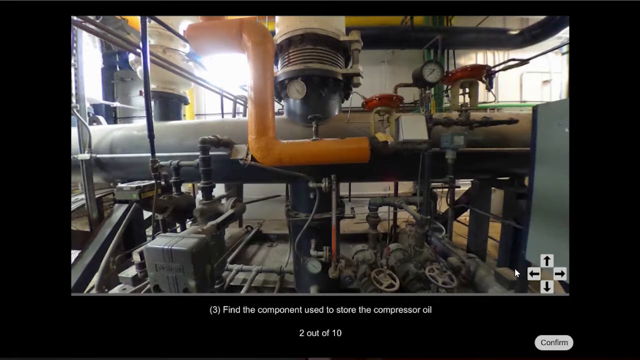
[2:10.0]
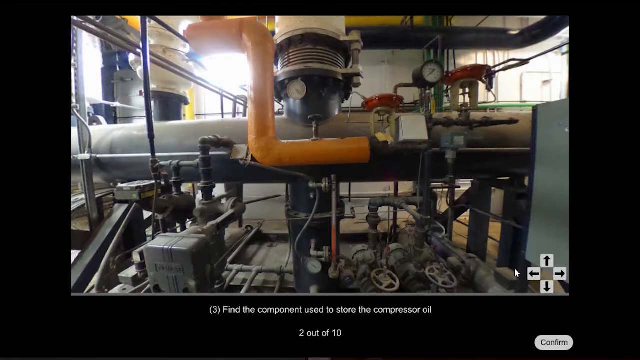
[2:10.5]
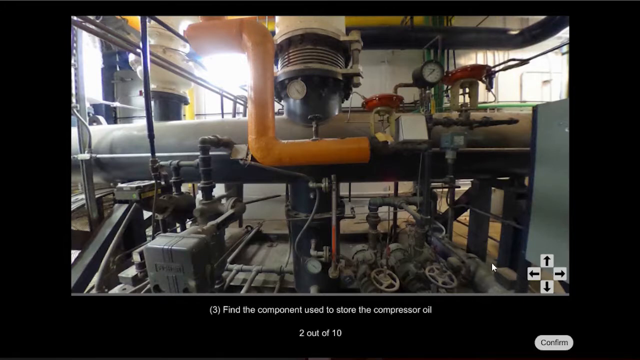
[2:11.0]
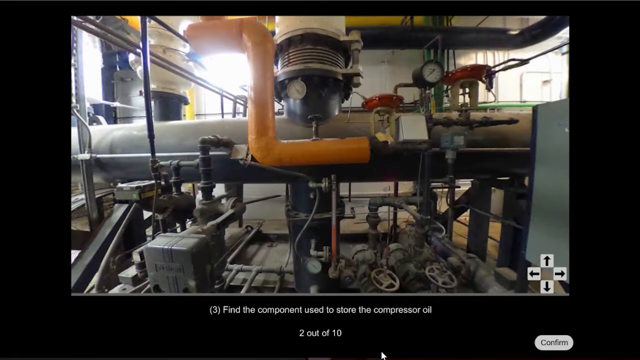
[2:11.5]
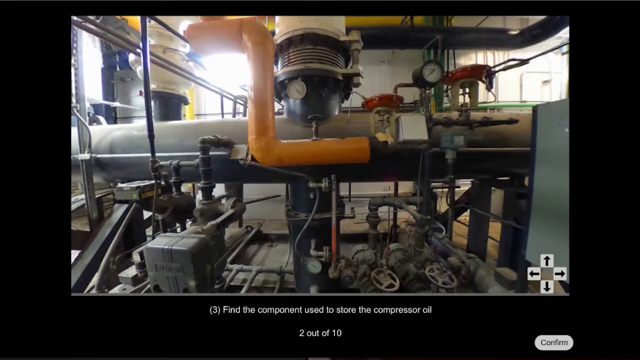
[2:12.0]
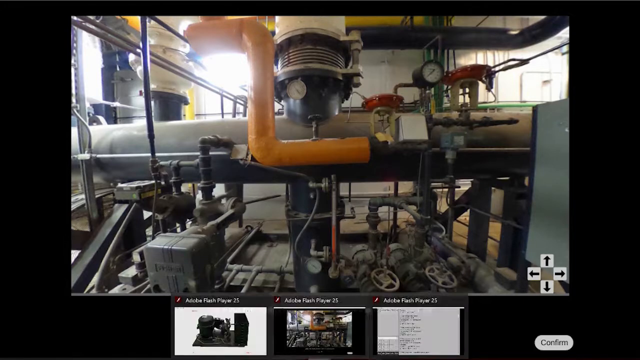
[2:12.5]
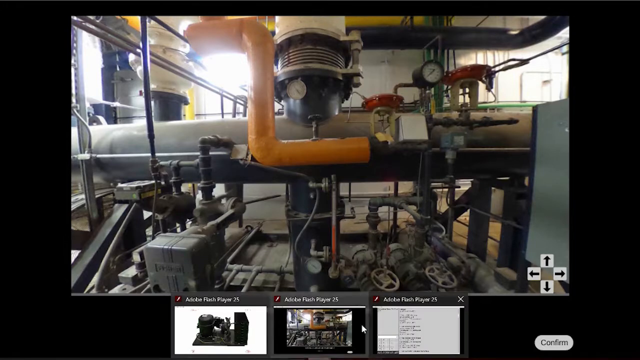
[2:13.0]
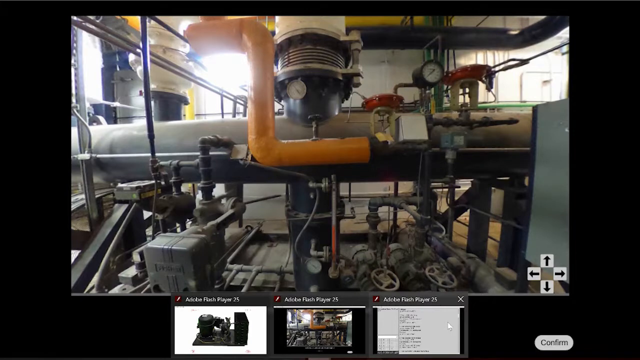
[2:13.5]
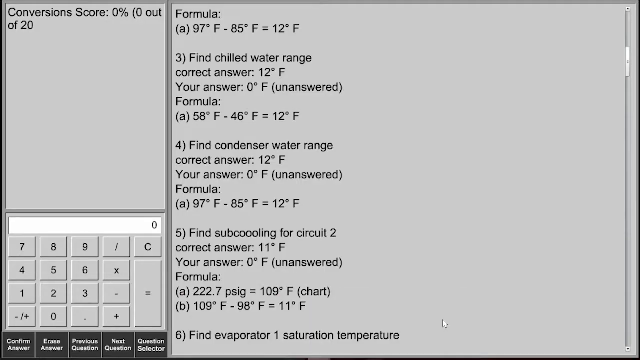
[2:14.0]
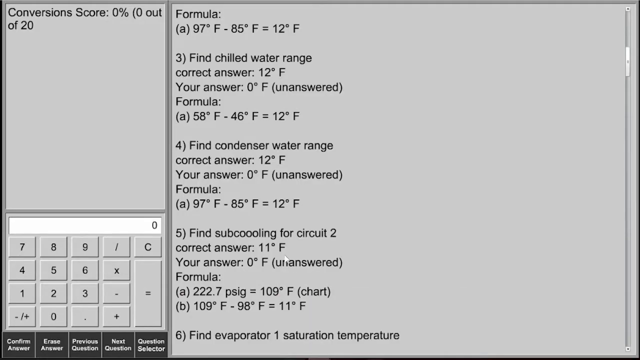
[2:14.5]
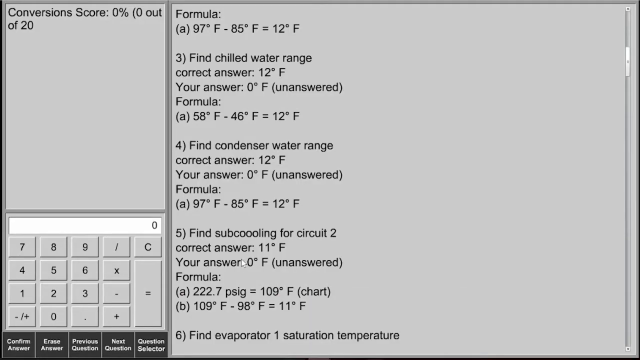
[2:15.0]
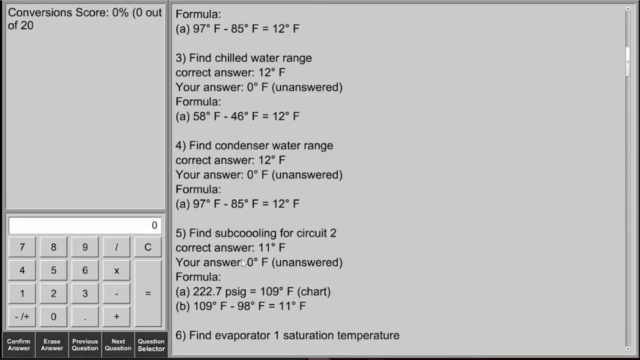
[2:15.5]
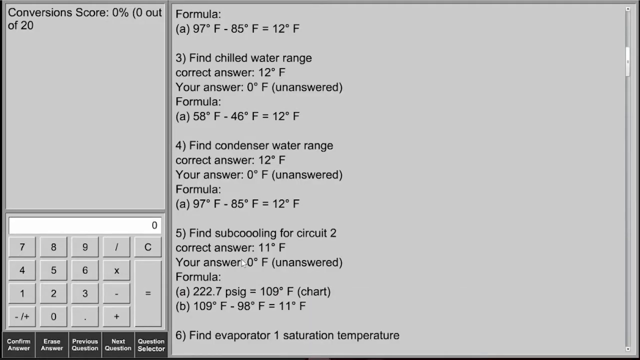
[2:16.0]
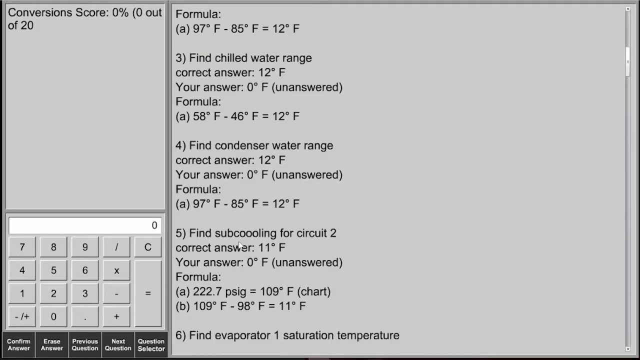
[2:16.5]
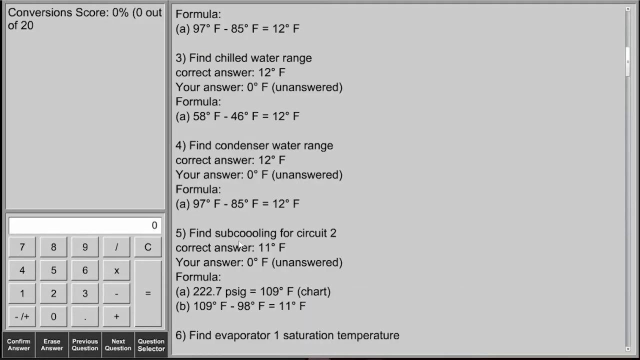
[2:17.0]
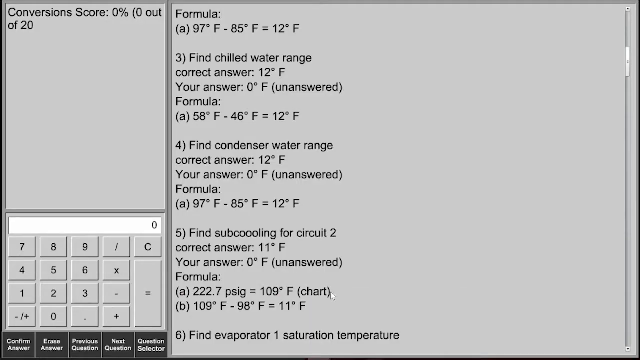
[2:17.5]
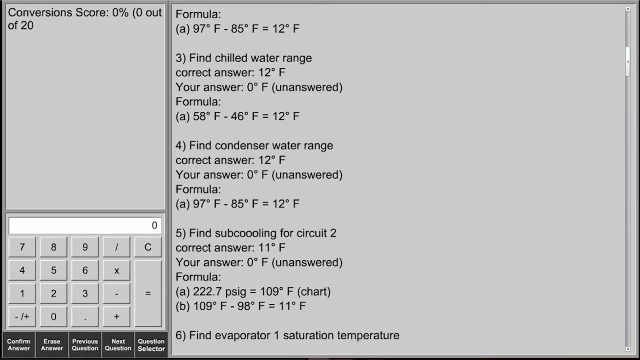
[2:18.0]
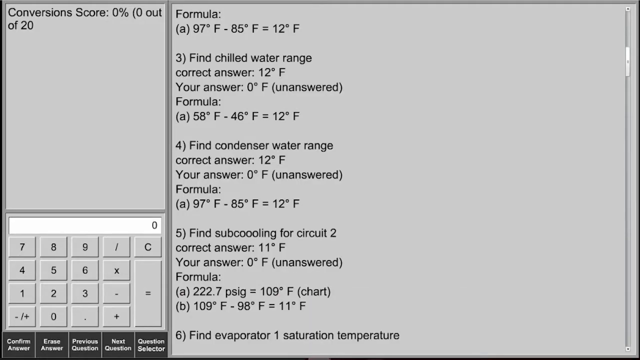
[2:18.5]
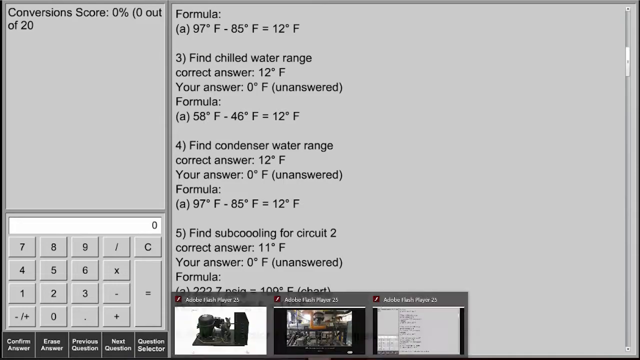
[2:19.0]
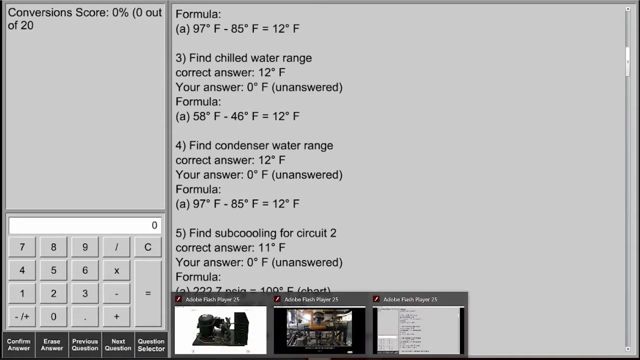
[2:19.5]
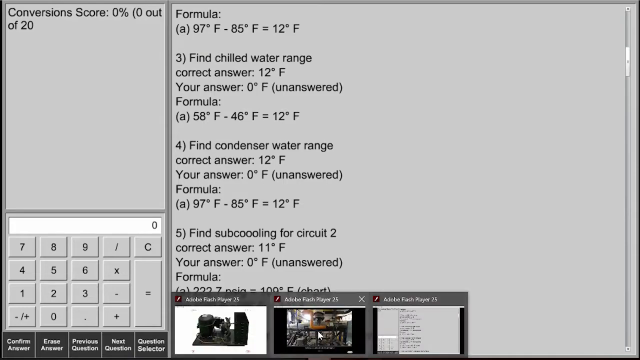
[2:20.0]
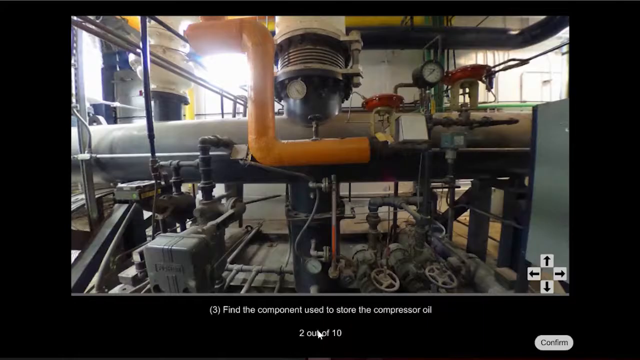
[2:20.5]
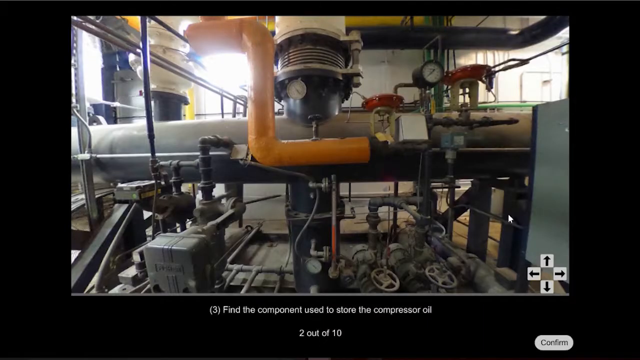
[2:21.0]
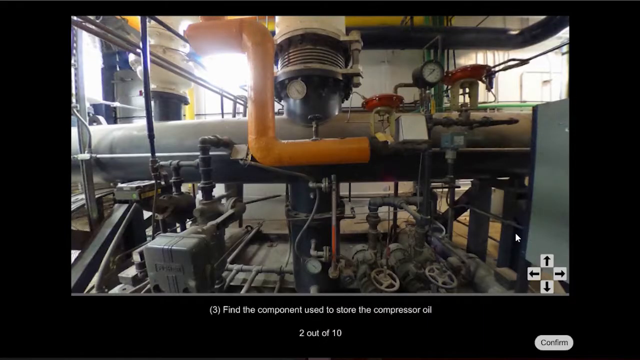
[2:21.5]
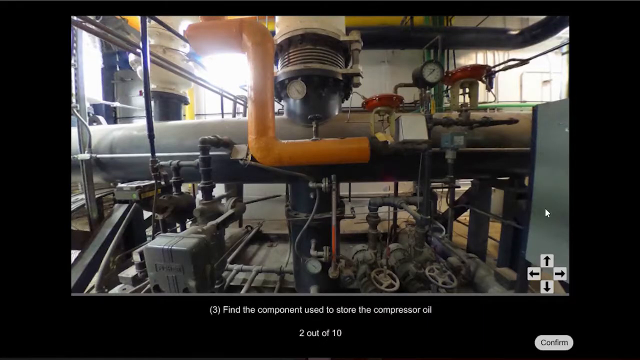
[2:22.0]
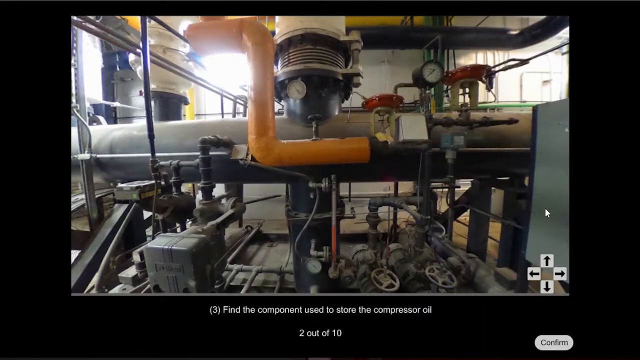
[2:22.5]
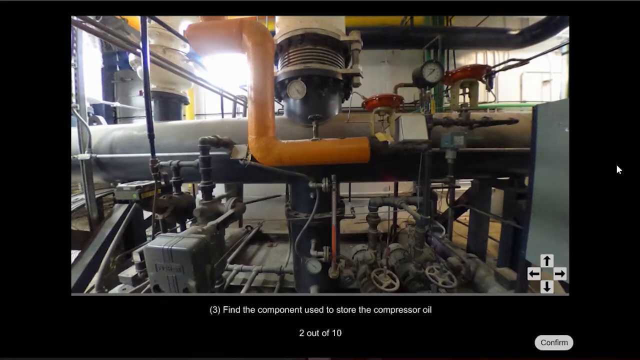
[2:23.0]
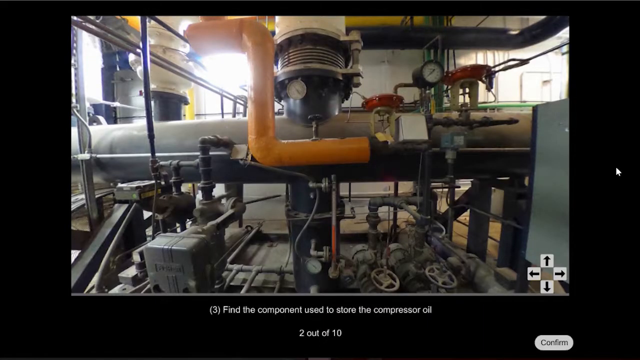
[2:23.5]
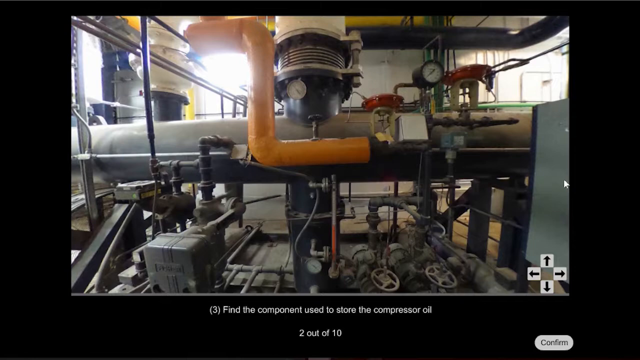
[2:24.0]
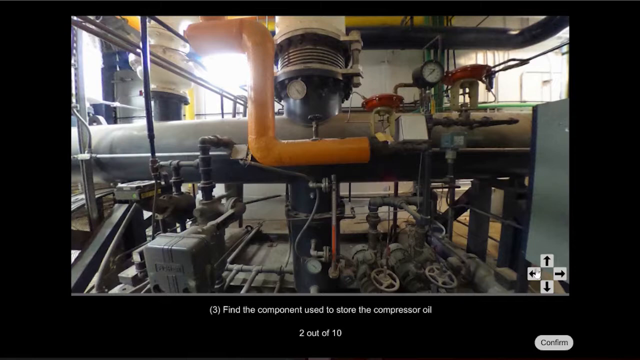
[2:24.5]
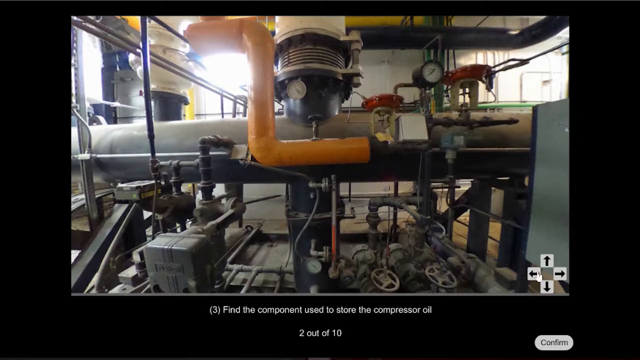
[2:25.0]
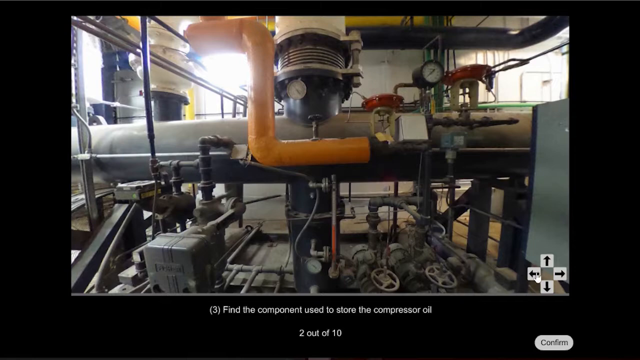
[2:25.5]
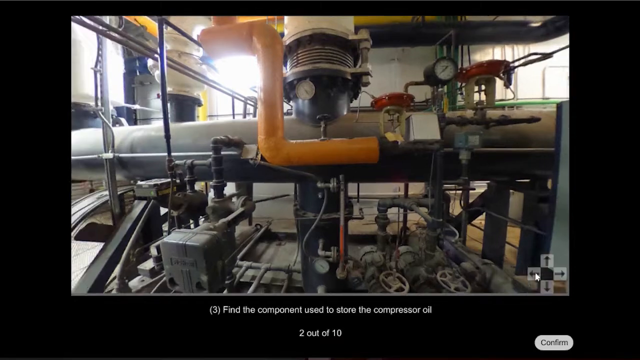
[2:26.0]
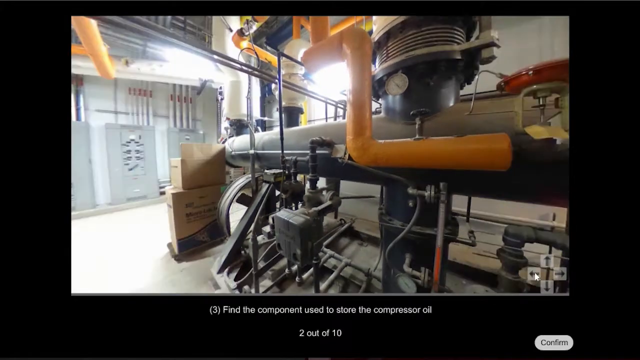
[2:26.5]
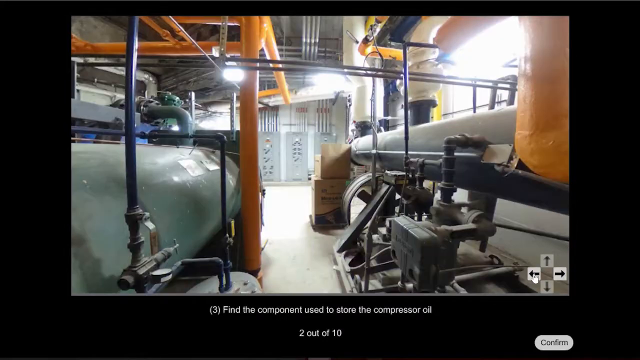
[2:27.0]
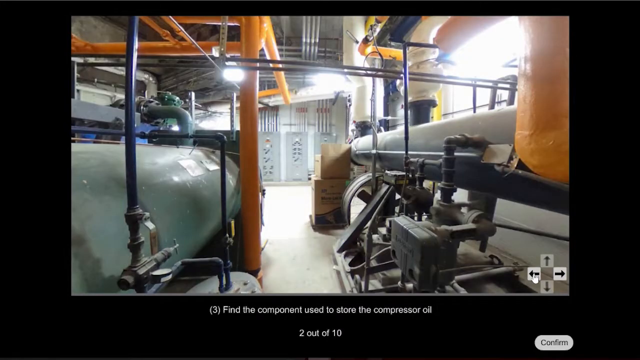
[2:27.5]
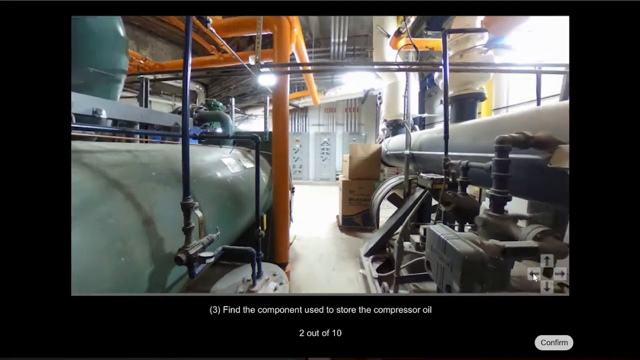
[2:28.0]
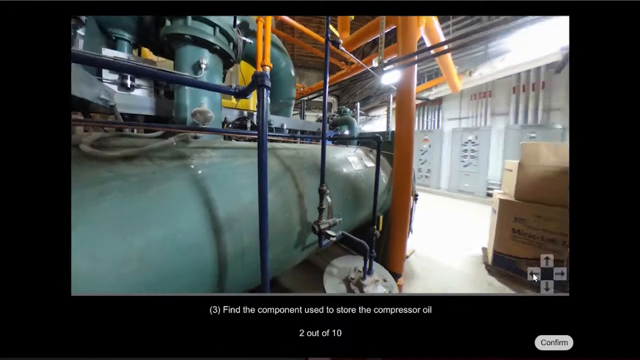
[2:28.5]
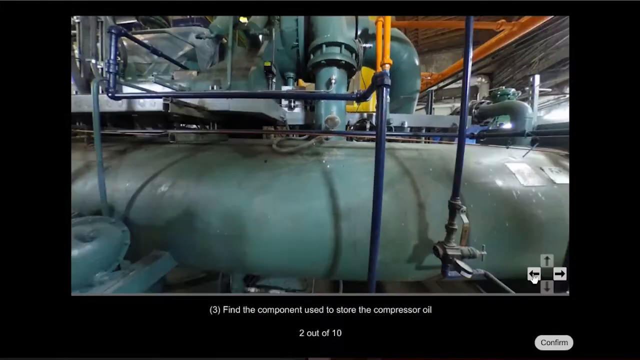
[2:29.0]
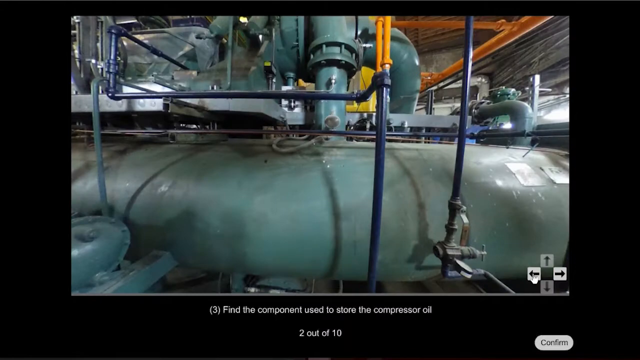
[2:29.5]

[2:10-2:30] Question three is on screen: "Find the component used to store the compressor oil." The view shows the tubular body of the second piece of machinery, not the first one, with the piping and equipment around it. It has multiple gauges, valves and piping of various sizes coming in and out, with the orange pipe and the white pipe predominantly featured. Clickable on-screen directional arrow buttons let the user navigate the entire display. The user goes to the screen showing the conversion score of 0%, zero out of 20, with the test questions, formulas and calculator, then returns to the original image. They click the left arrow button, which points to a control unit with various shutoff valves and what look like various switches and things that can be turned. The orange pipe and the green body of the large unit seen originally are also visible. The view then returns to where the scene began.